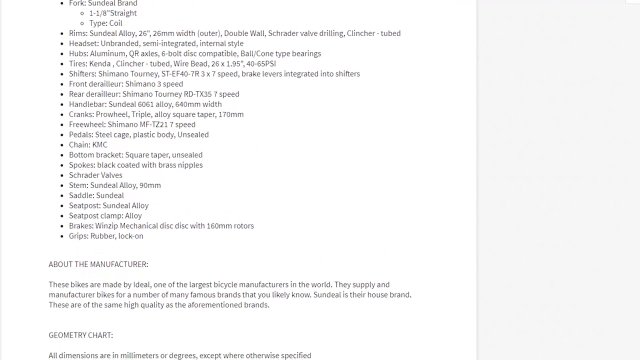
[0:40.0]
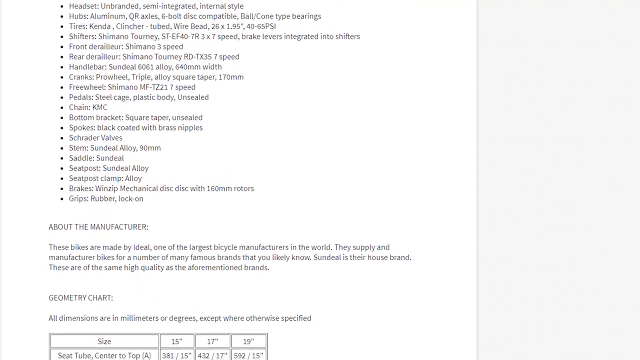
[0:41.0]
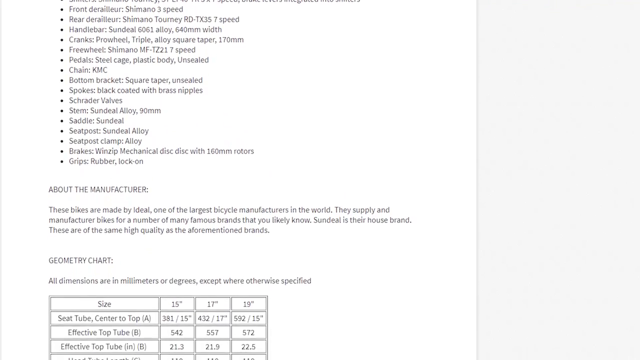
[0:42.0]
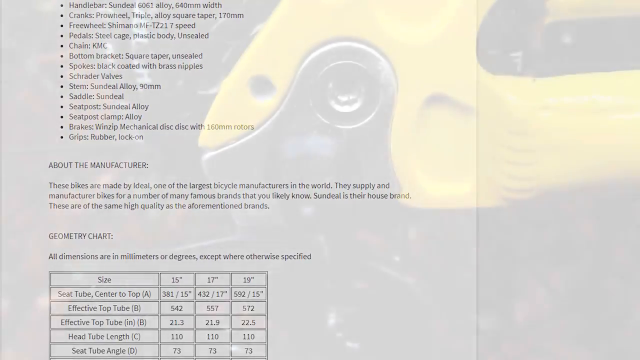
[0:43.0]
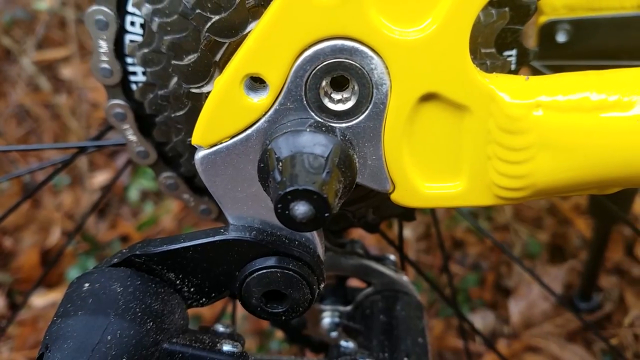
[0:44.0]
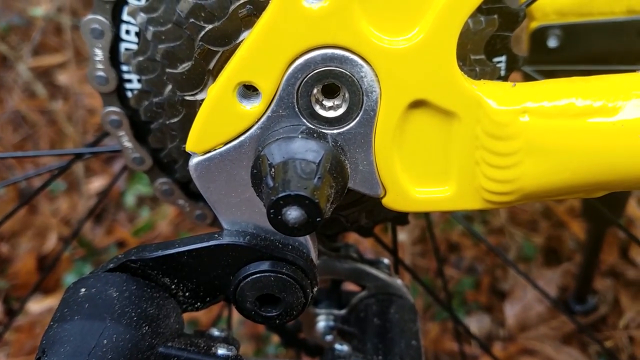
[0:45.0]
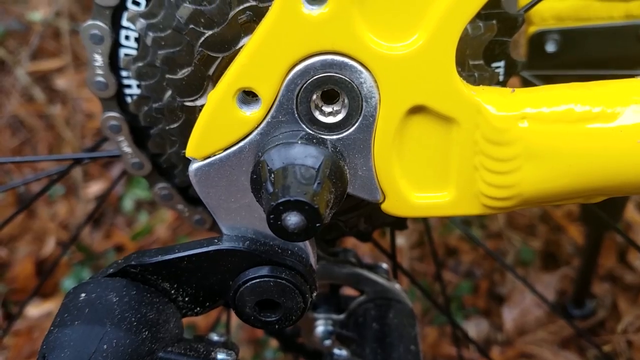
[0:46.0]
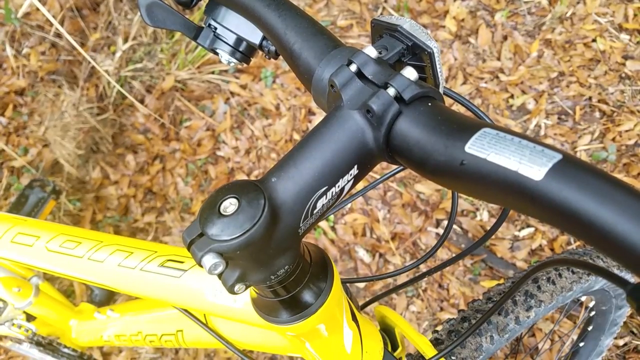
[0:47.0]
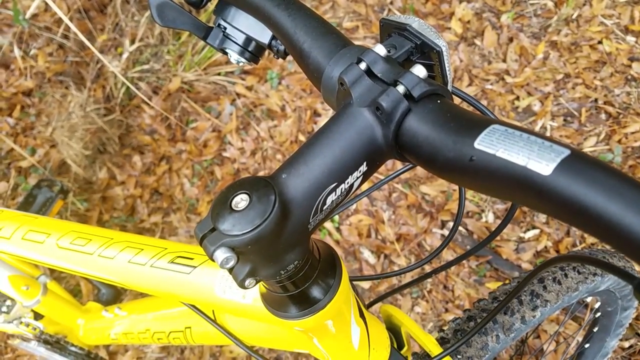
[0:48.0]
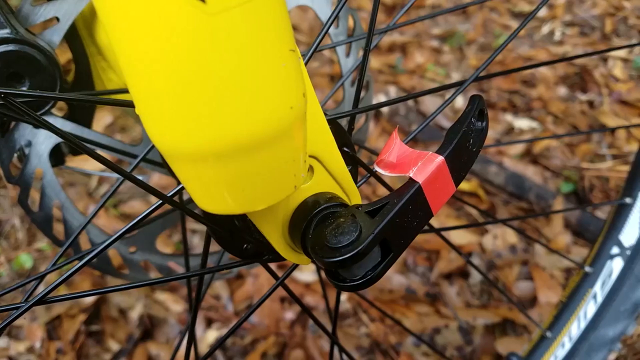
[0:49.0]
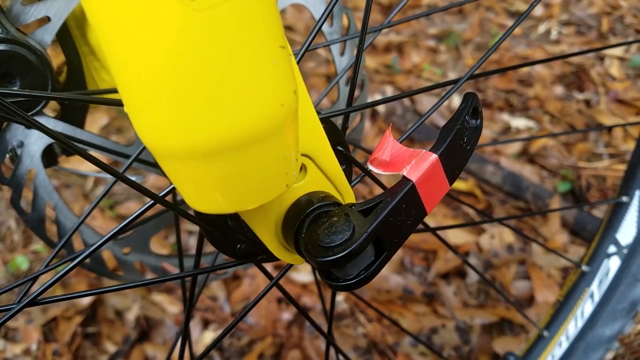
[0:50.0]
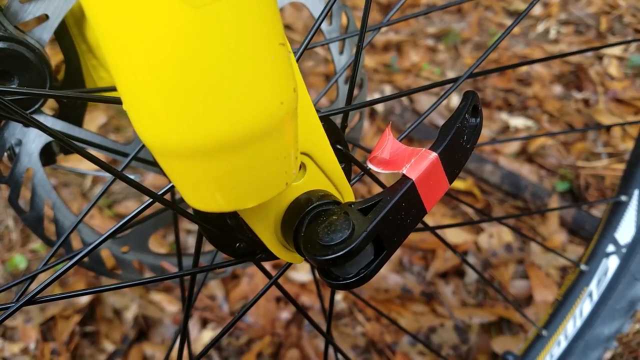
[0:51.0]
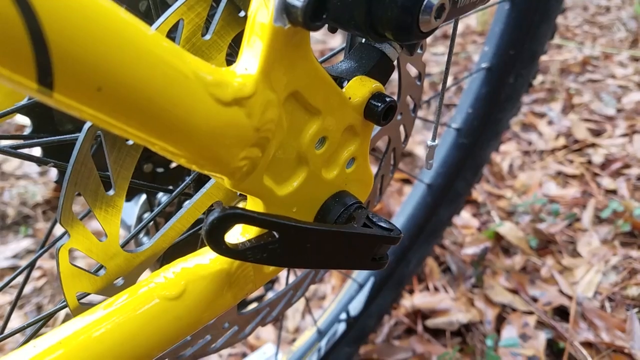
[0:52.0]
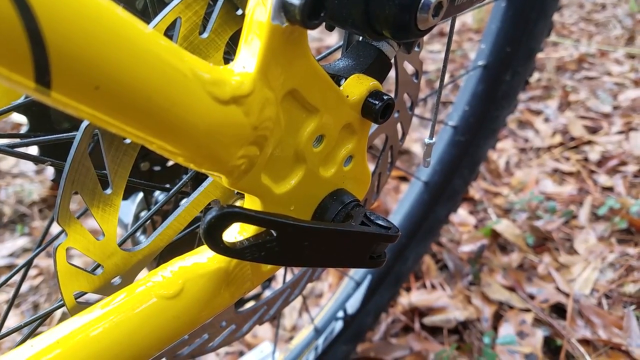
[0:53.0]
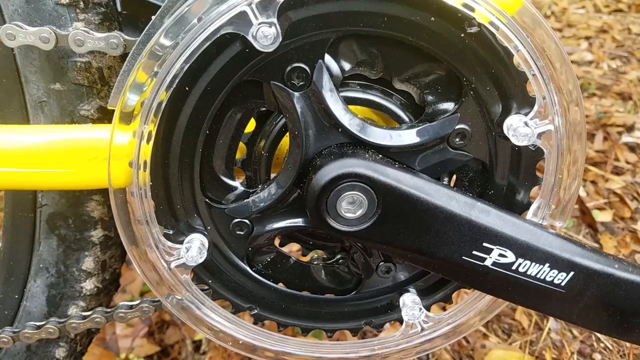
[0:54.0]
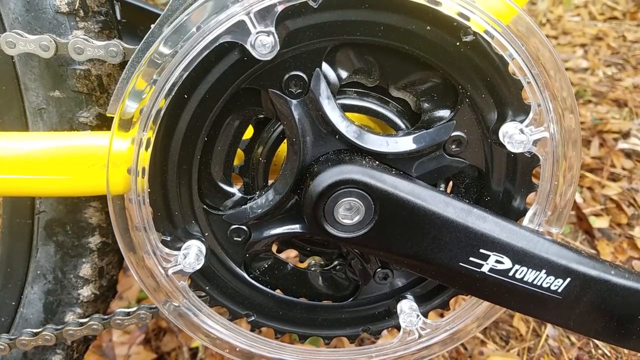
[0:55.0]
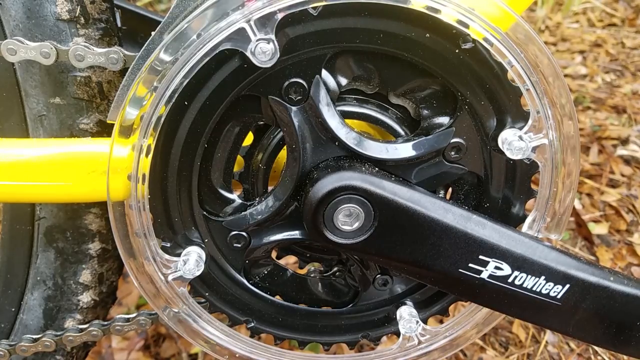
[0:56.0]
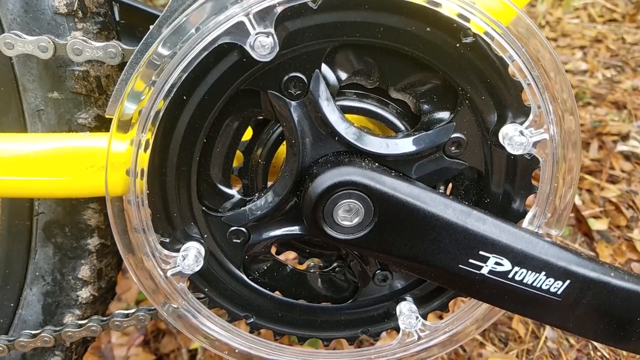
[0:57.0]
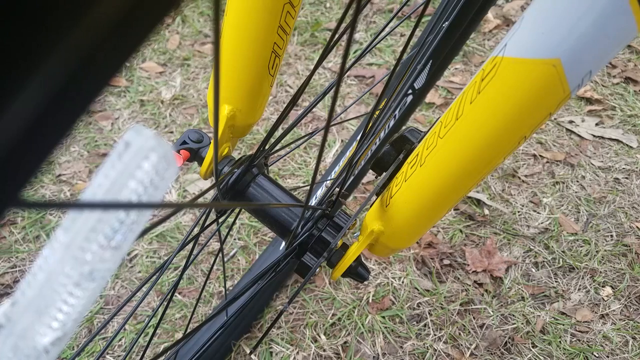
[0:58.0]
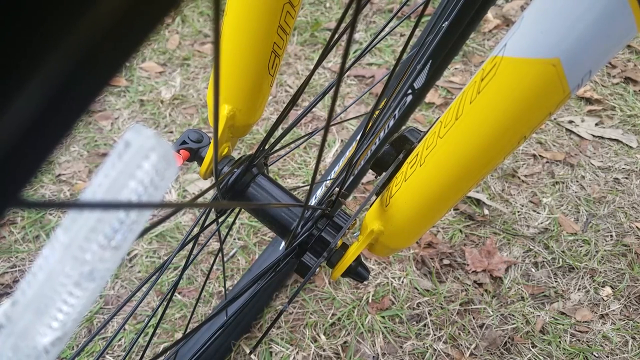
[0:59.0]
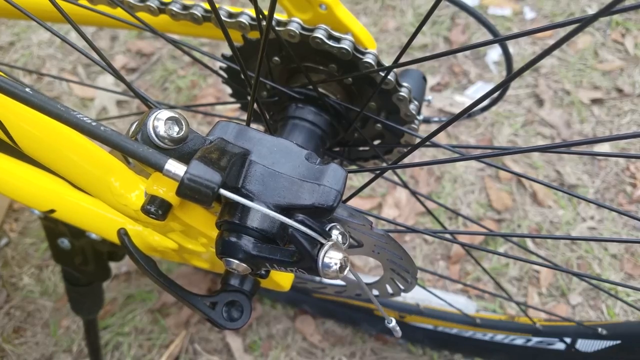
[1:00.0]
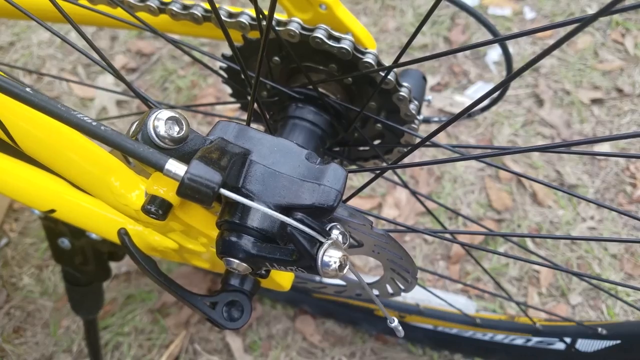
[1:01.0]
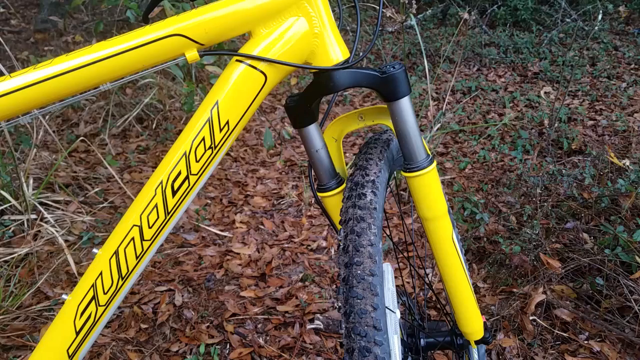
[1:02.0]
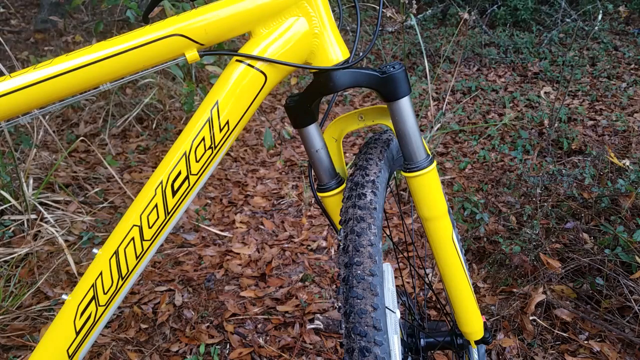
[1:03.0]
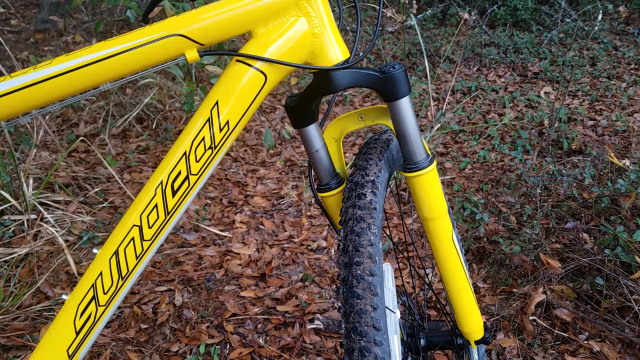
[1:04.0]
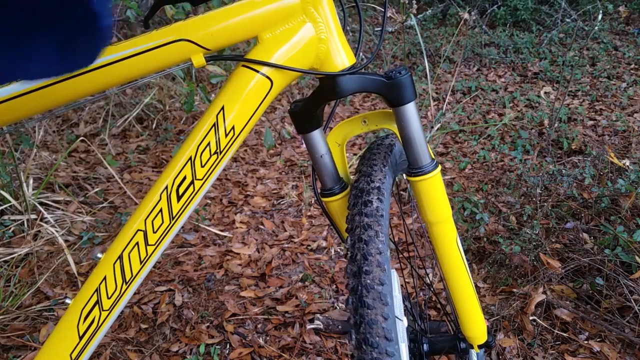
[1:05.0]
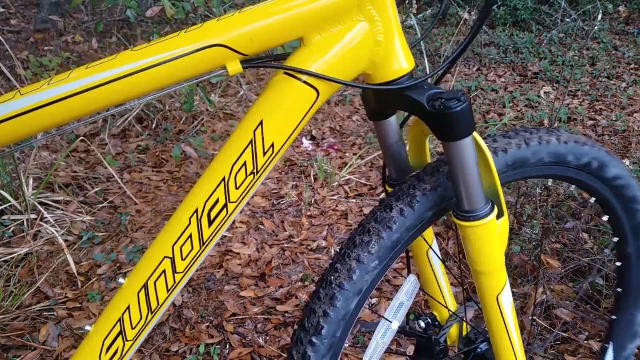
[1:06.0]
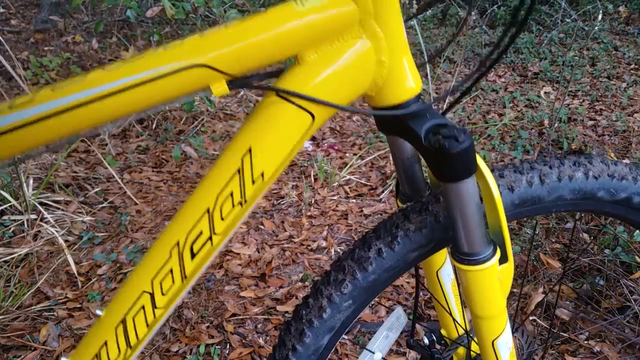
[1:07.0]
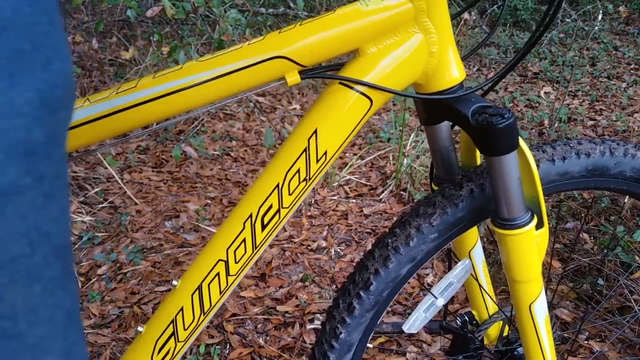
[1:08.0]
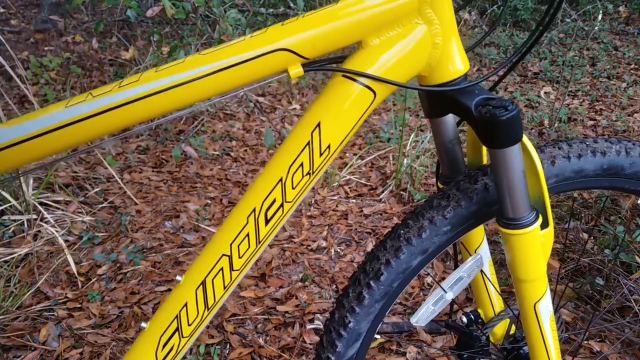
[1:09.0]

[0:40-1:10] The mountain bike from Amazon has been assembled with a kickstand on it, and there is a piece of paper listing all the specs. Close-ups follow of the gear, the handlebar, the quick release for the front tire and one for the back, the sprocket, the axle, the brake, the forks and the tires. It is a men's bike. Someone jumps on it a little to show a sort of hydraulic feature on the forks.